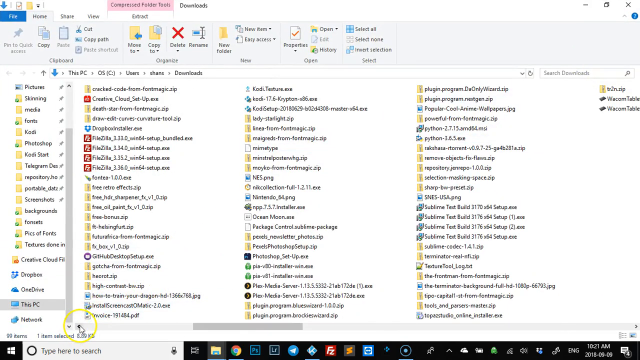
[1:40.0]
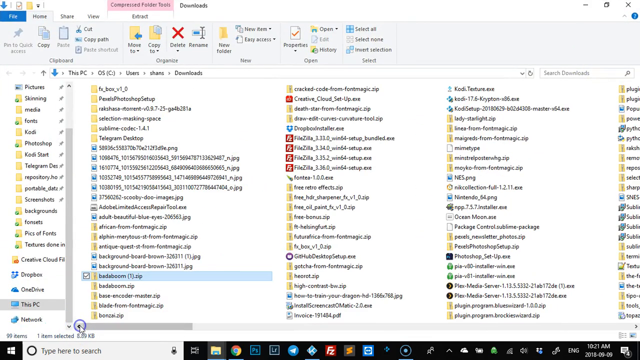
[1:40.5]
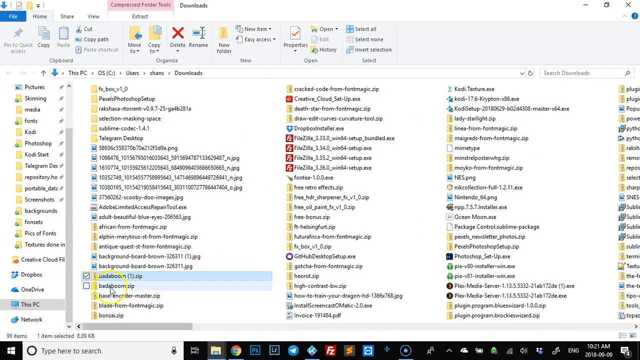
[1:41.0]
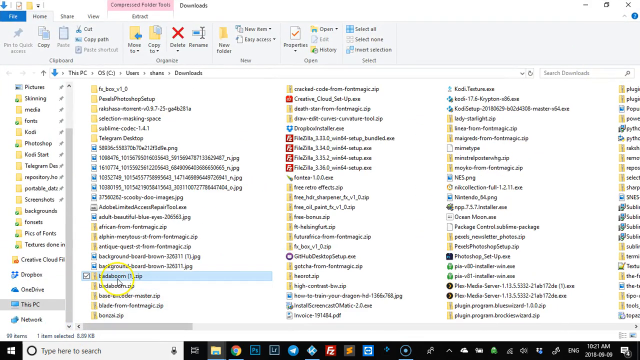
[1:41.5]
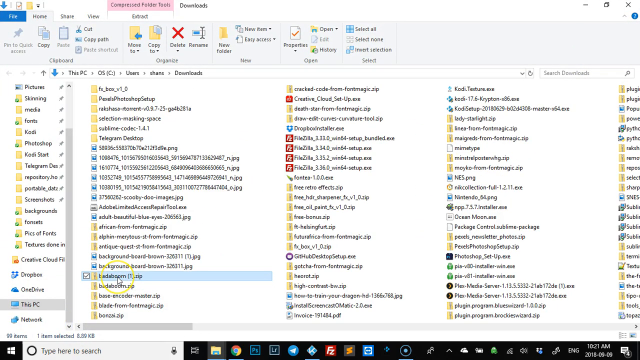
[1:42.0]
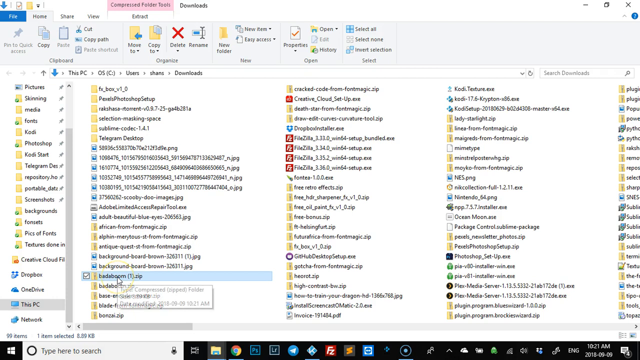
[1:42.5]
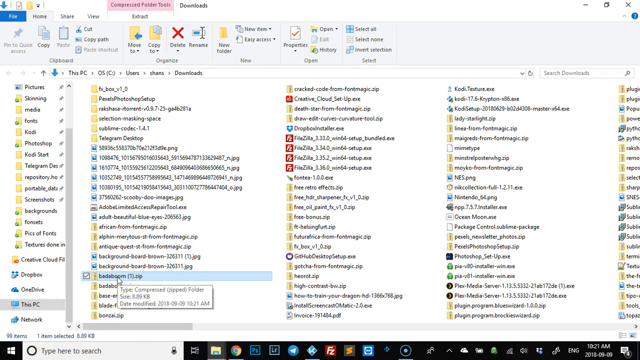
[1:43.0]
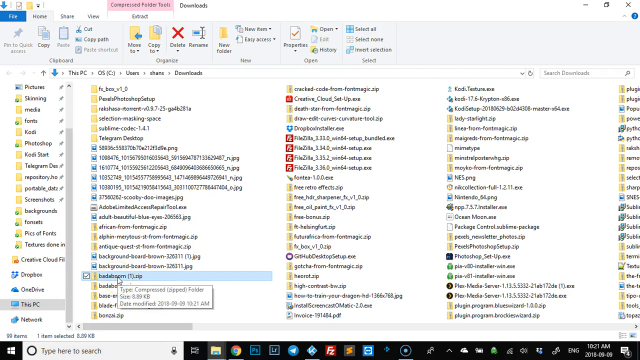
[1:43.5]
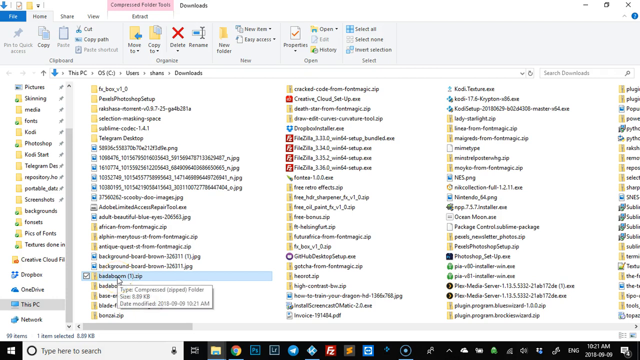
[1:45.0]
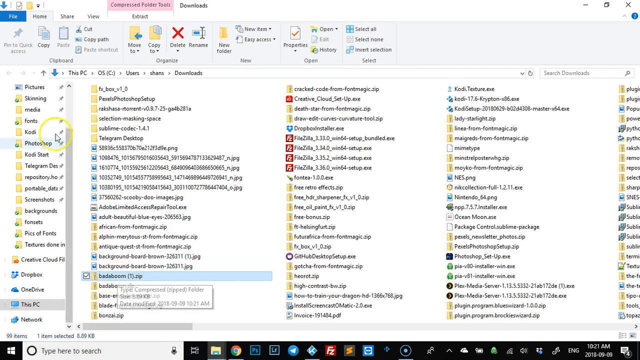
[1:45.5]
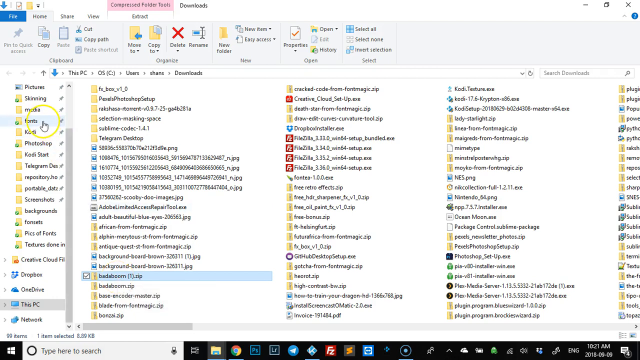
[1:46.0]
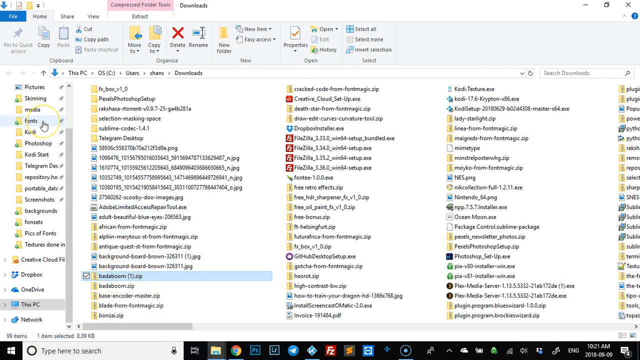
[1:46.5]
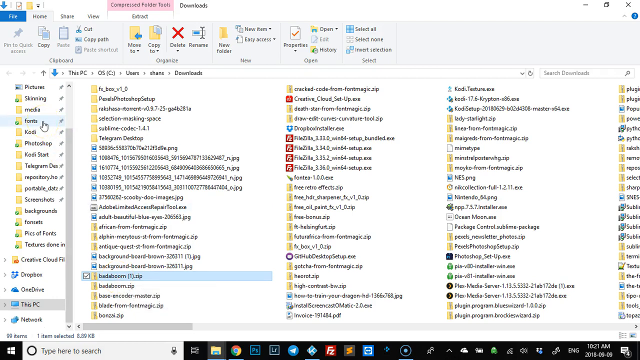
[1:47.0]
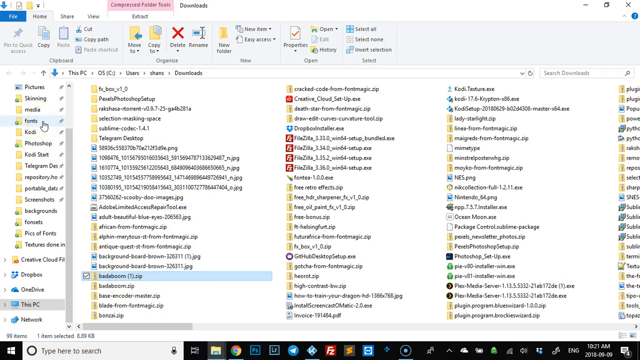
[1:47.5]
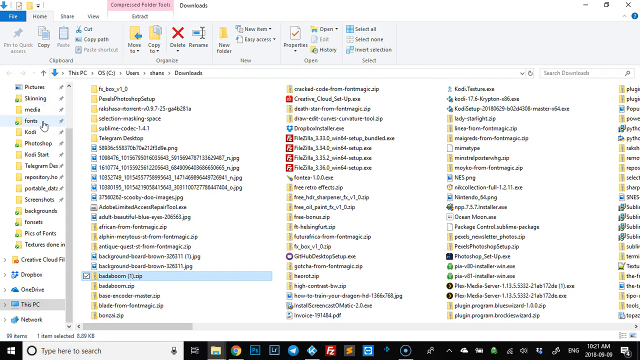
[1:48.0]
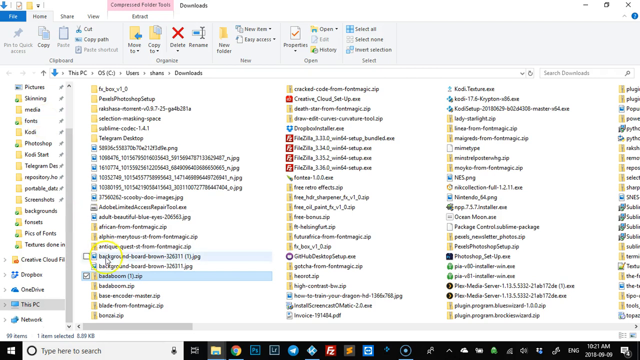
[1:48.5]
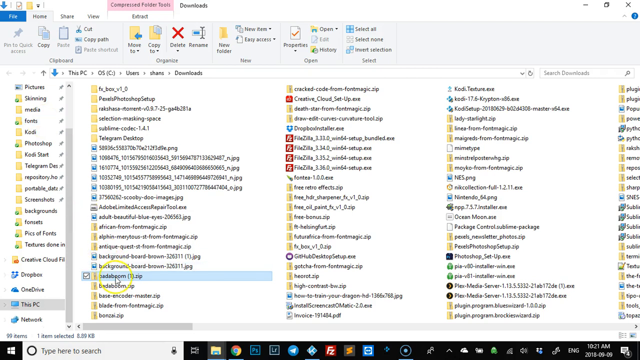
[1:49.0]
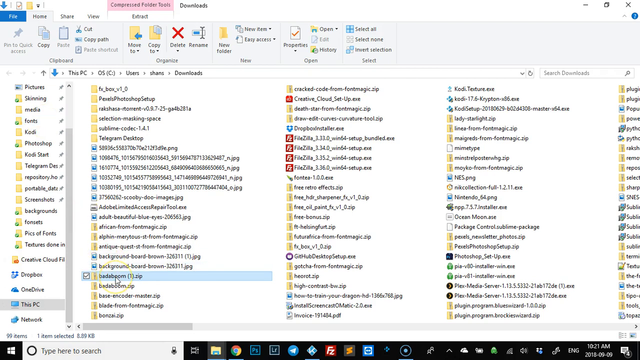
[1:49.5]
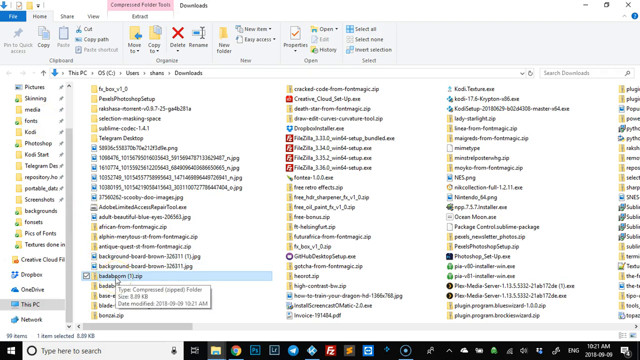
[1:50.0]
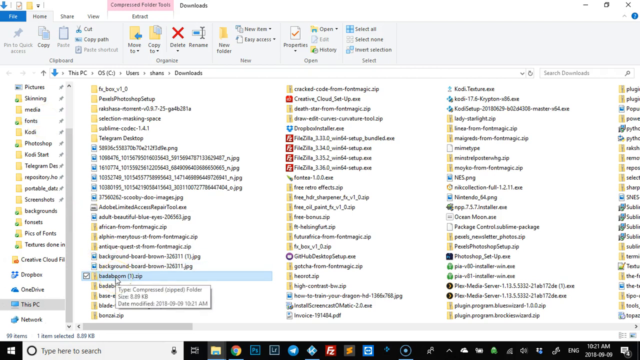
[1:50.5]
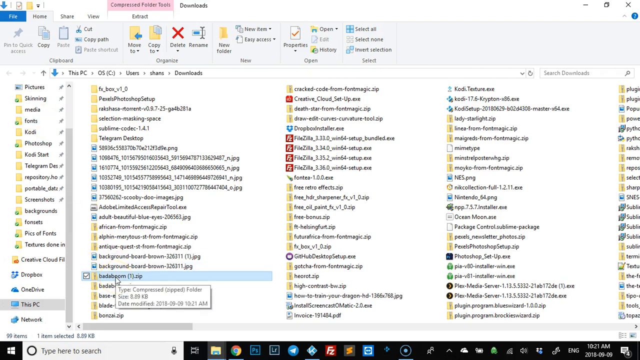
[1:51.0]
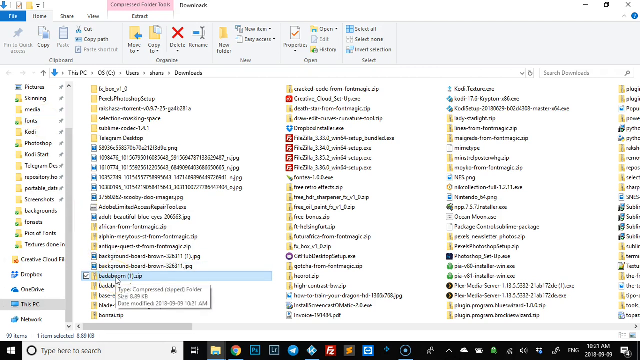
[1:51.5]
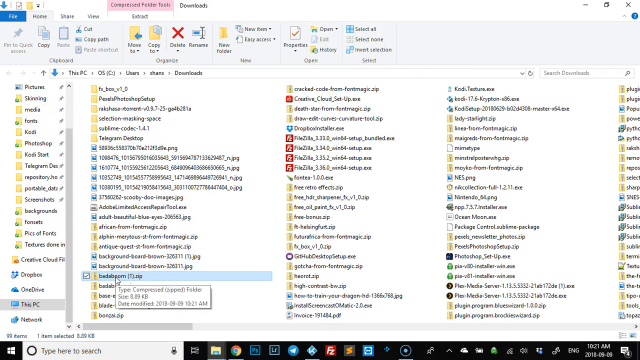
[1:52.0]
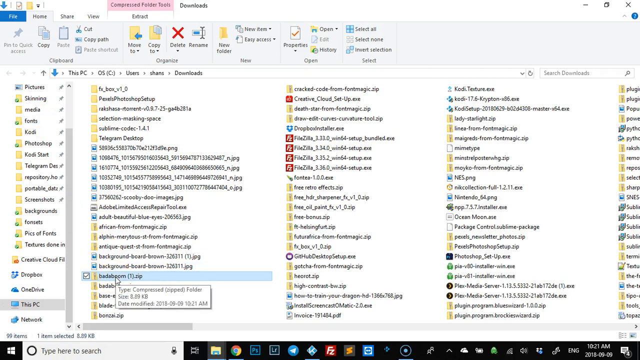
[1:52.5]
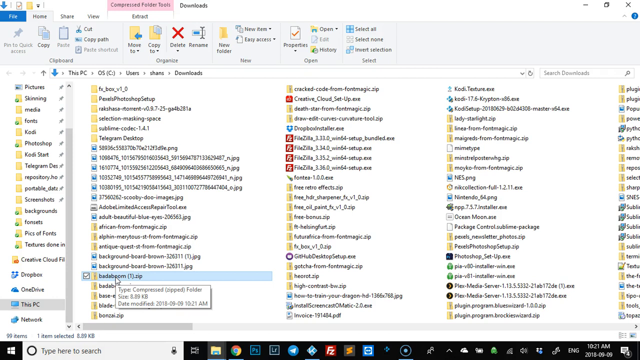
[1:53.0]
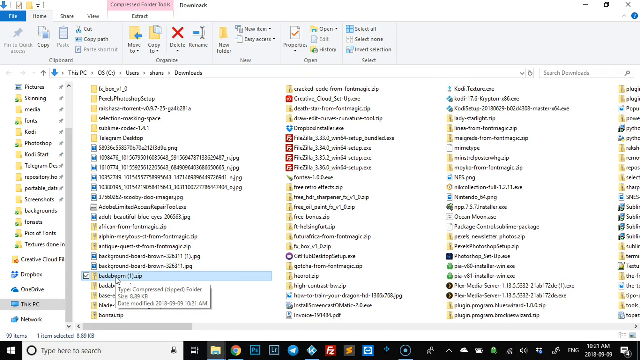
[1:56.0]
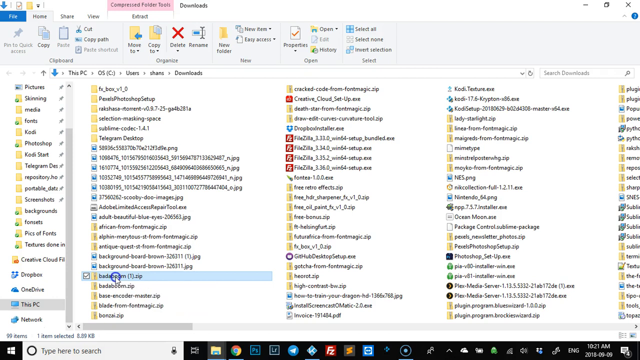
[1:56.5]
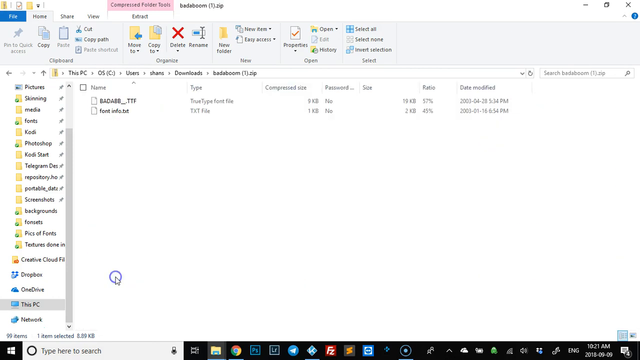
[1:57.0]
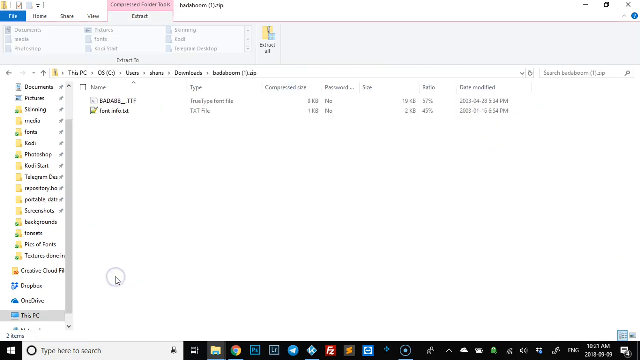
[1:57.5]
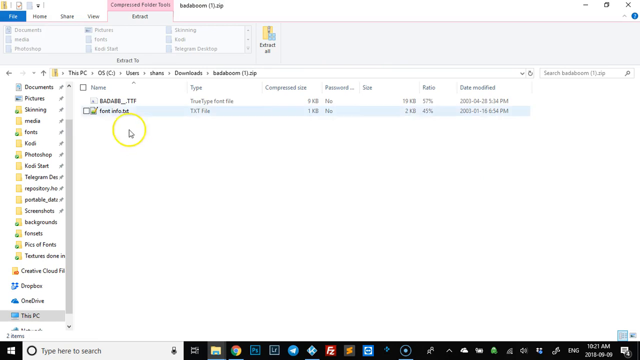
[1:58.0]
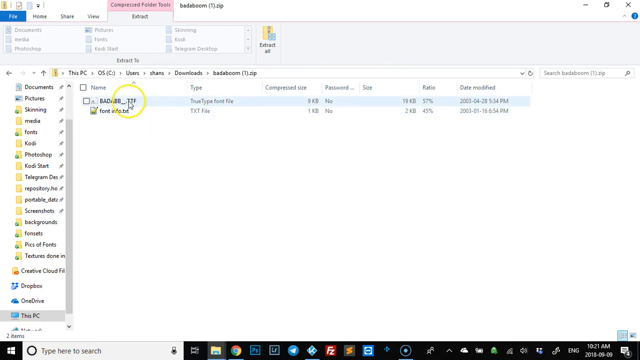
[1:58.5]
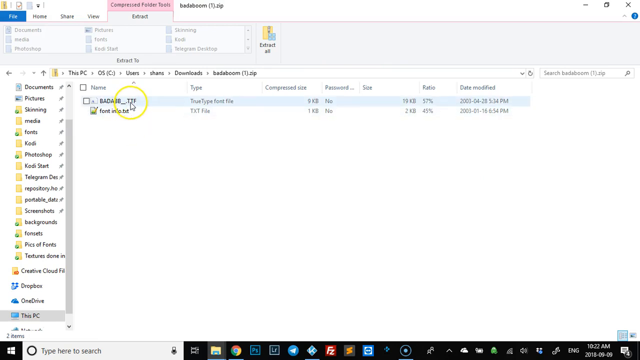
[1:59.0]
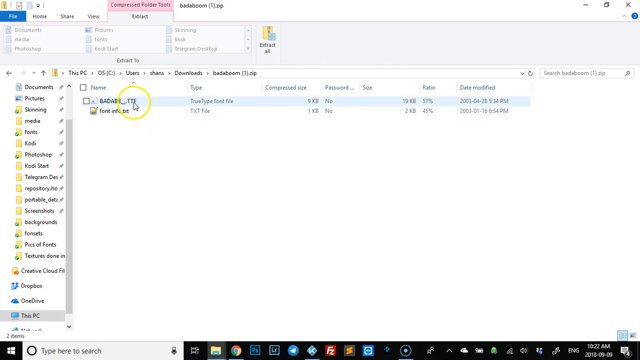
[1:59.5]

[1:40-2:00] The folder section of the person's workstation is shown, with "compress folder tools" visible. Something is highlighted down below, maybe on the left, along with an arrow. The person looks like they need to do a bit of searching for the file; all the way to the left, the file is located and checked, with a check visible in the box. They then go to the fonts area and highlight it, as if to reference where the location probably is. It is clicked open, bringing up two items within the folder, with the contents unzipped. The move to the fonts is not shown. Other folders are next to the fonts in that area, such as media, photoshop, telegram, possibly documents, and screenshots.